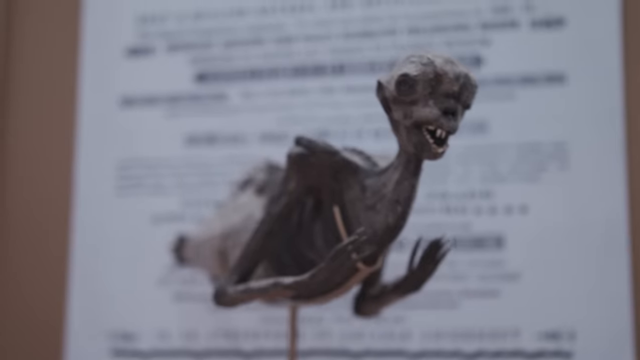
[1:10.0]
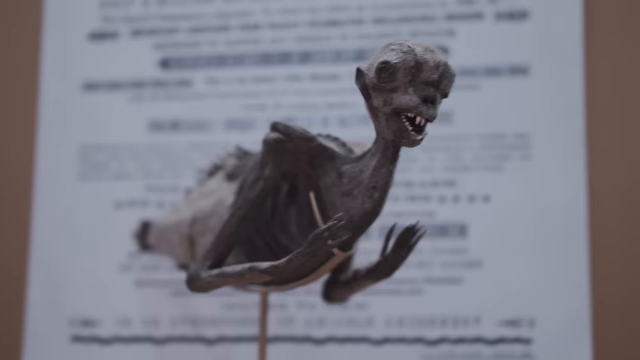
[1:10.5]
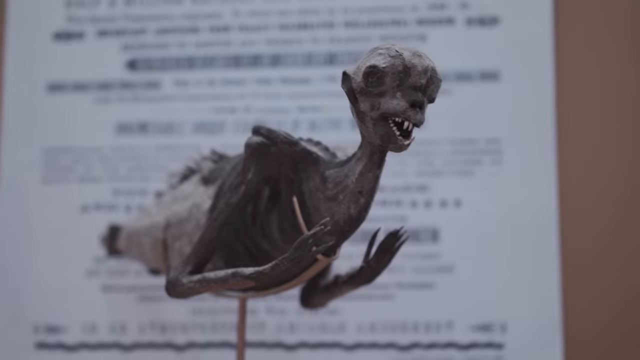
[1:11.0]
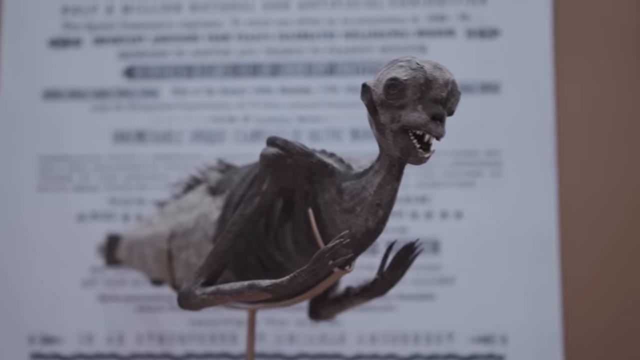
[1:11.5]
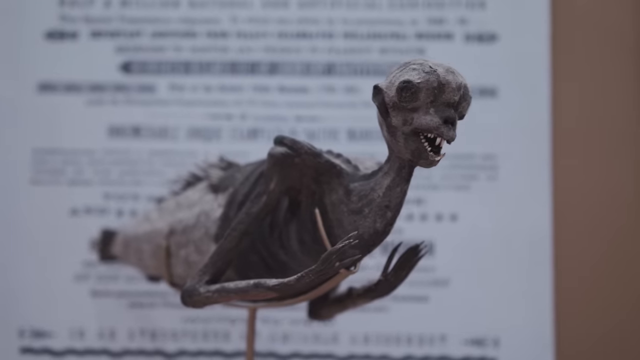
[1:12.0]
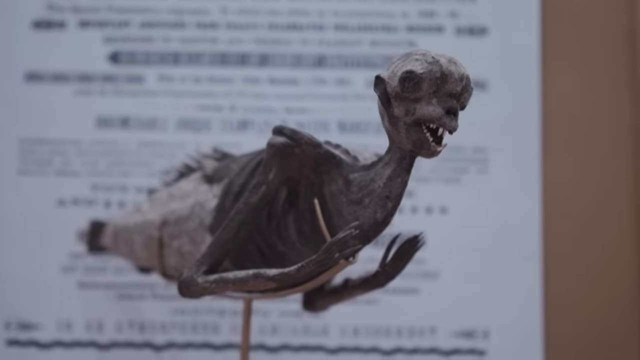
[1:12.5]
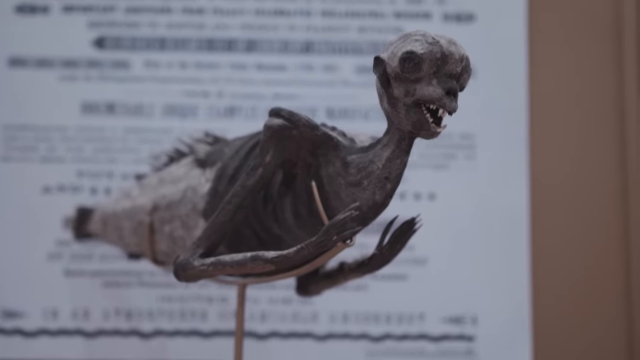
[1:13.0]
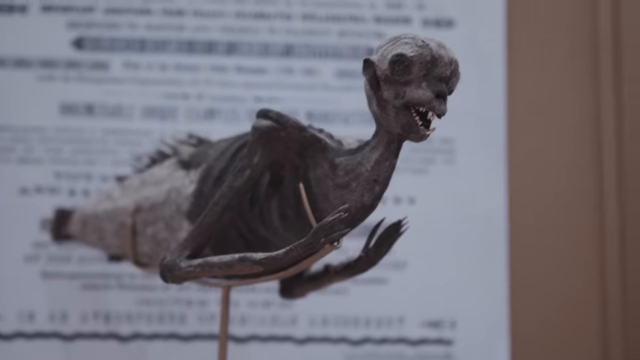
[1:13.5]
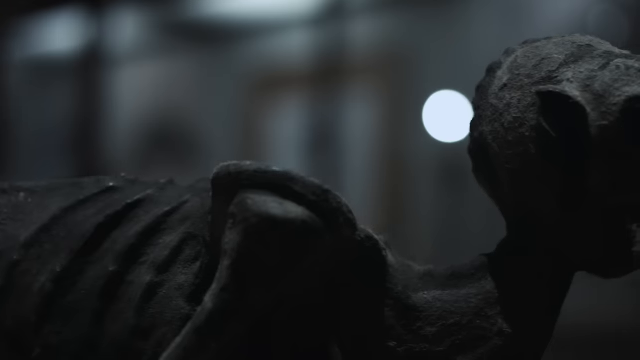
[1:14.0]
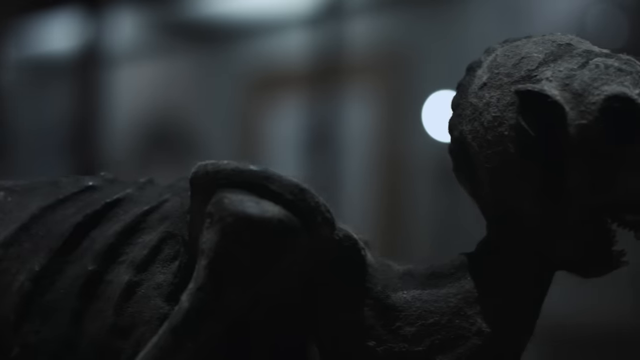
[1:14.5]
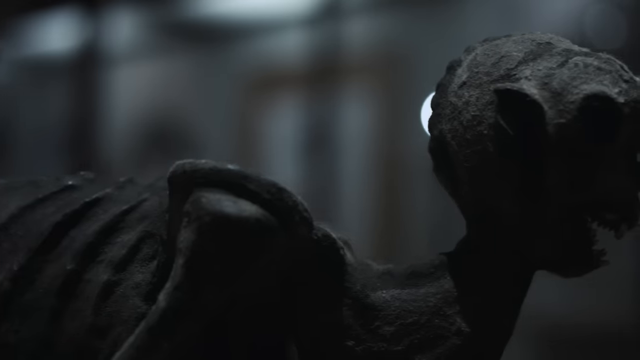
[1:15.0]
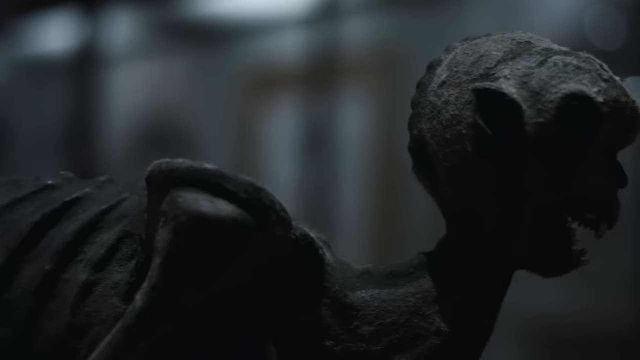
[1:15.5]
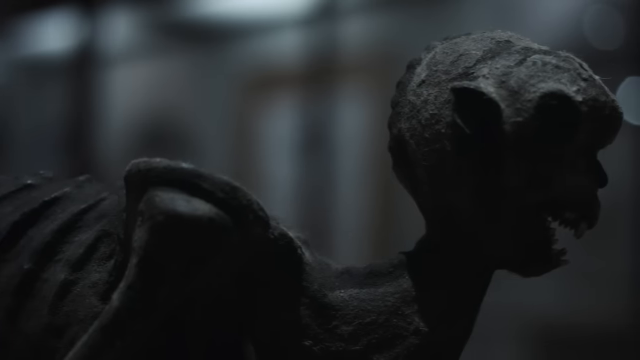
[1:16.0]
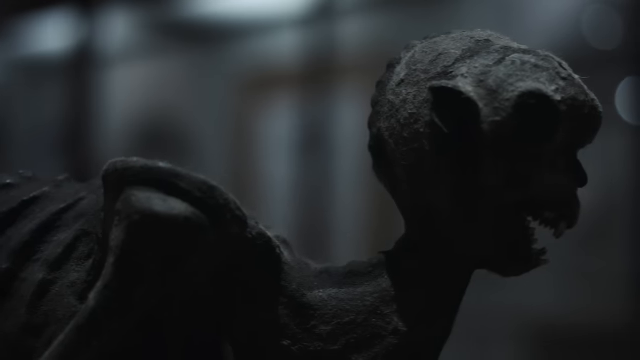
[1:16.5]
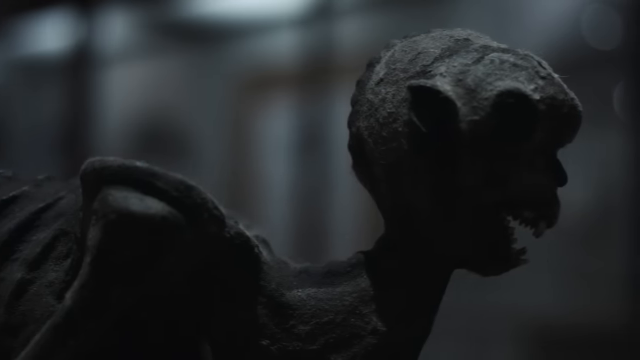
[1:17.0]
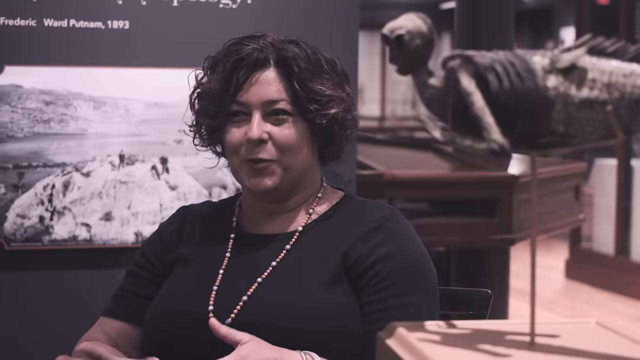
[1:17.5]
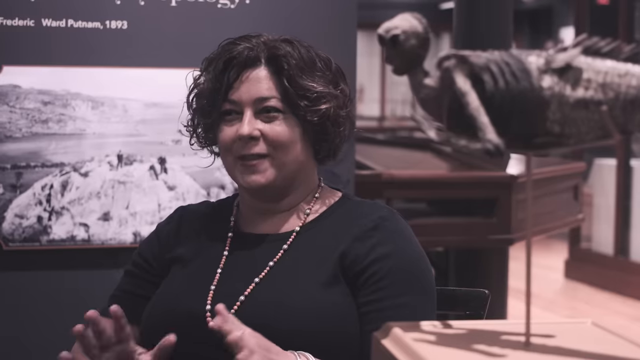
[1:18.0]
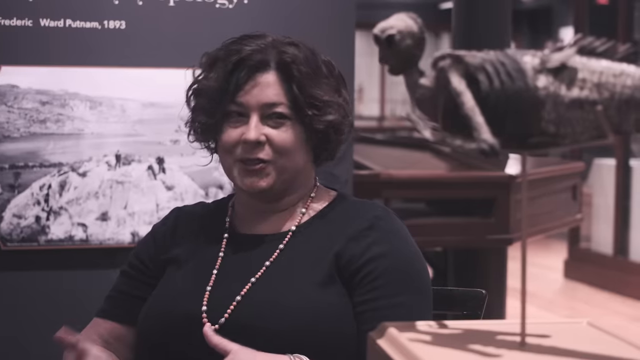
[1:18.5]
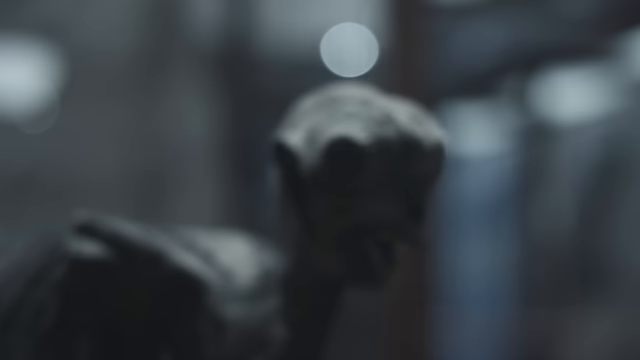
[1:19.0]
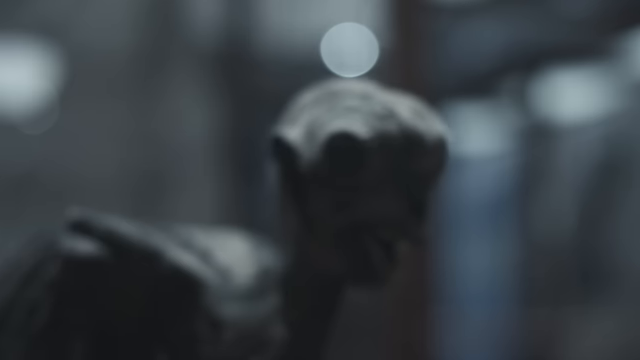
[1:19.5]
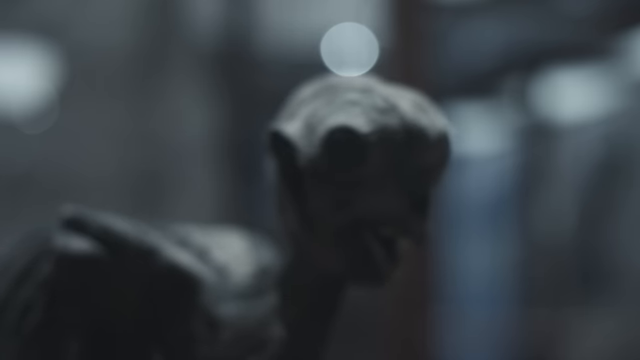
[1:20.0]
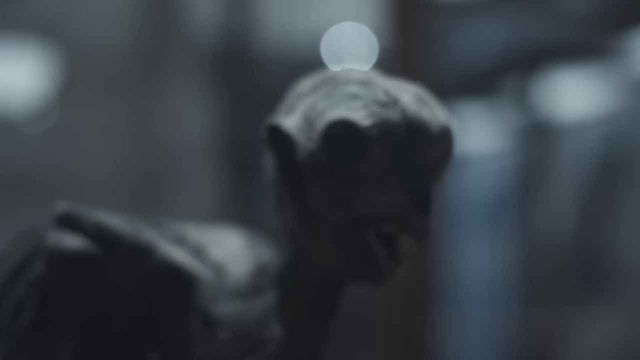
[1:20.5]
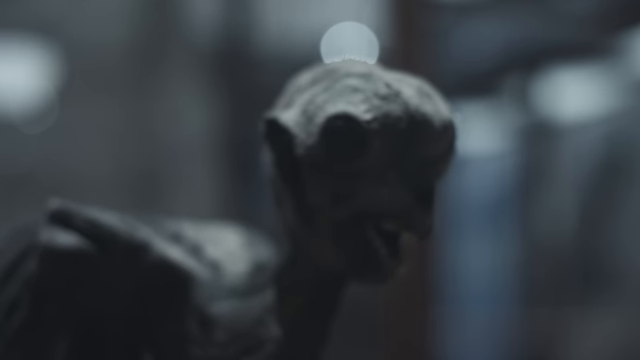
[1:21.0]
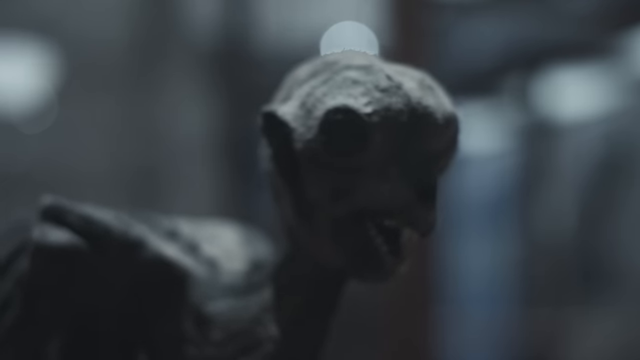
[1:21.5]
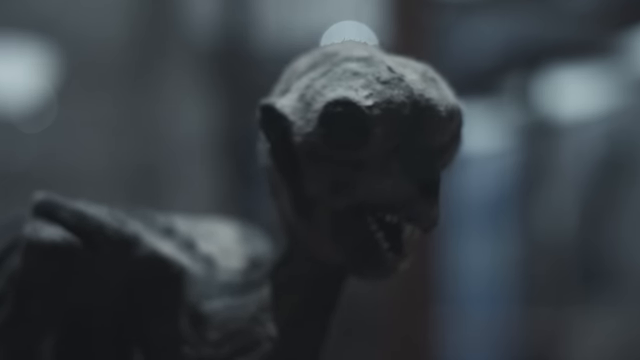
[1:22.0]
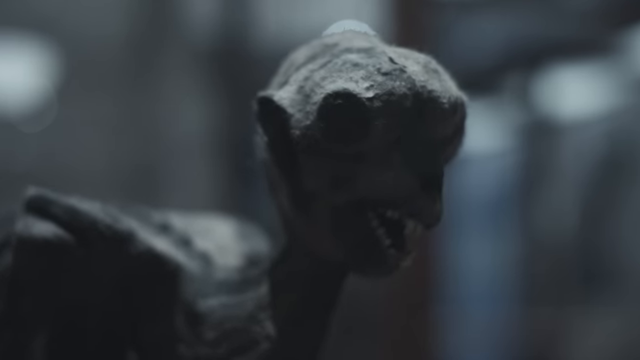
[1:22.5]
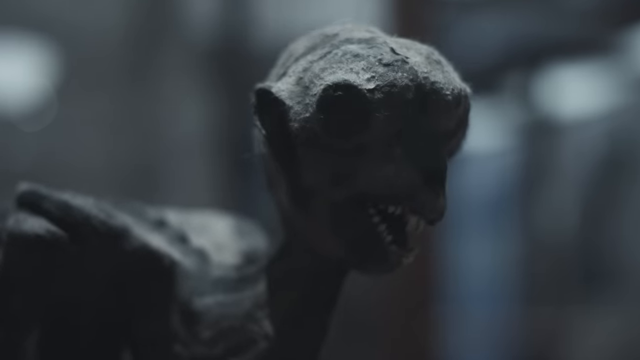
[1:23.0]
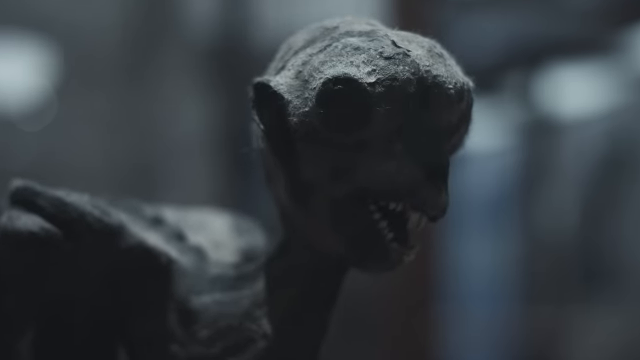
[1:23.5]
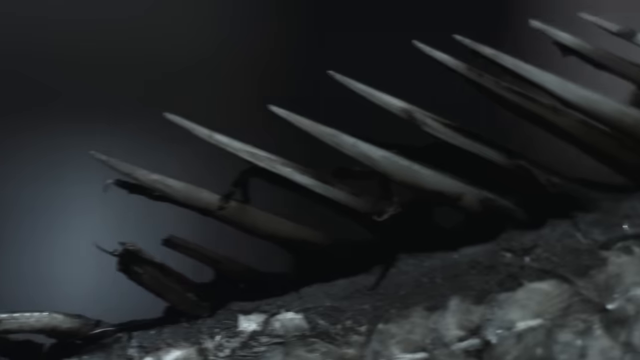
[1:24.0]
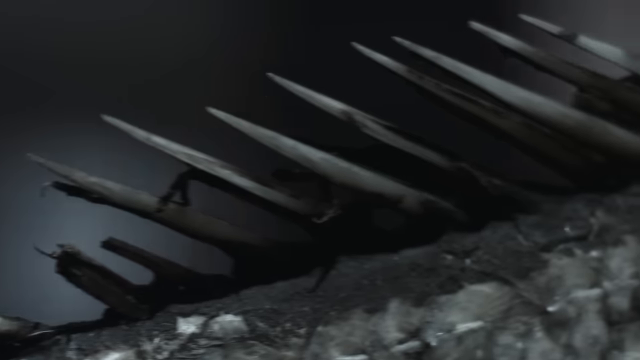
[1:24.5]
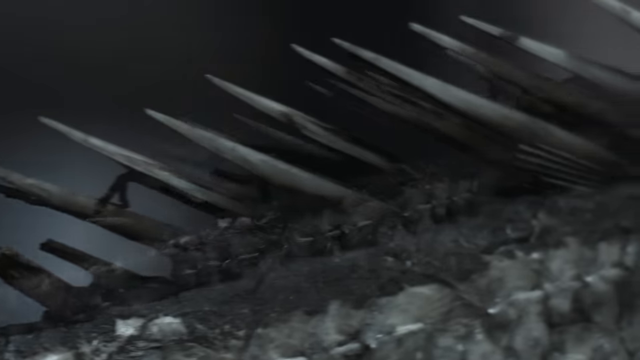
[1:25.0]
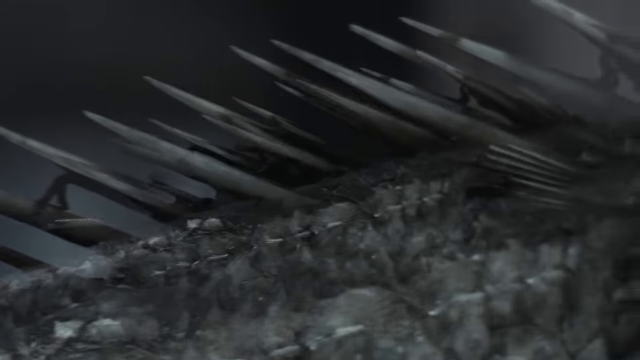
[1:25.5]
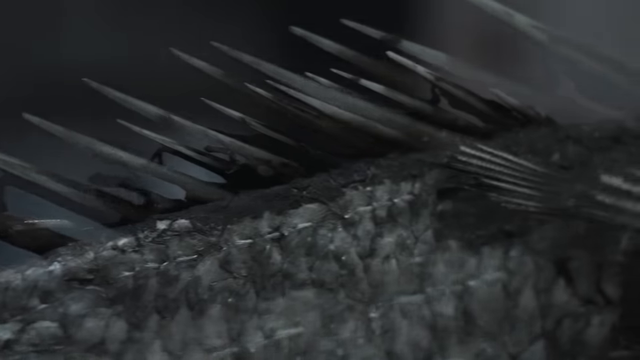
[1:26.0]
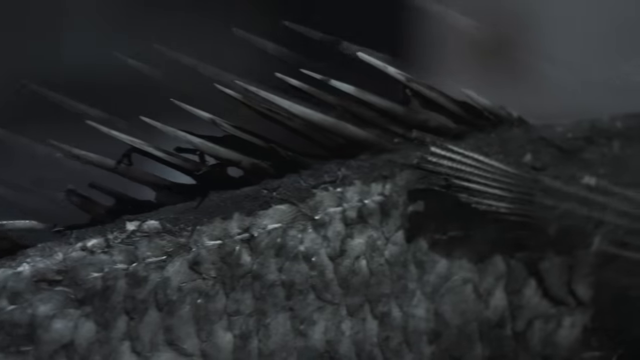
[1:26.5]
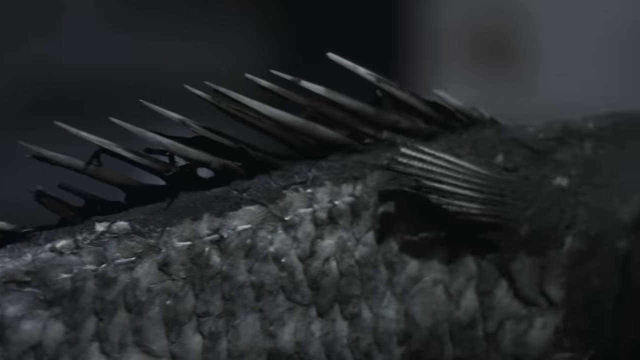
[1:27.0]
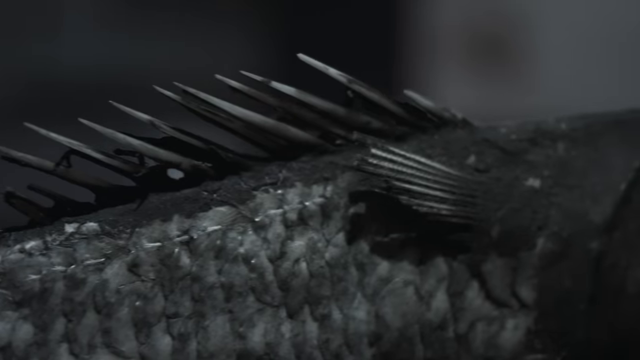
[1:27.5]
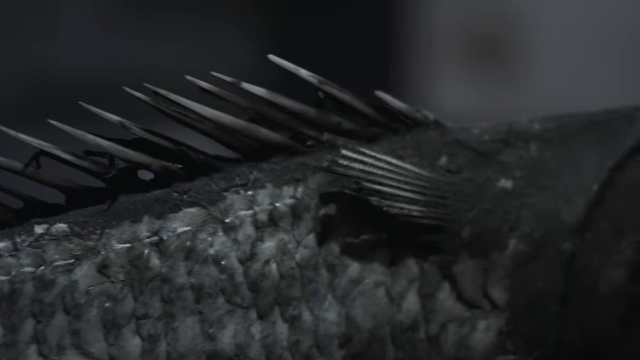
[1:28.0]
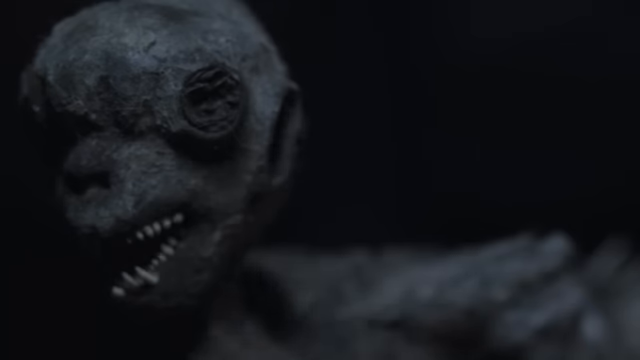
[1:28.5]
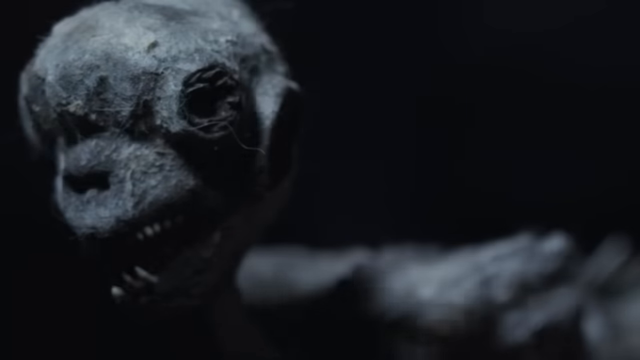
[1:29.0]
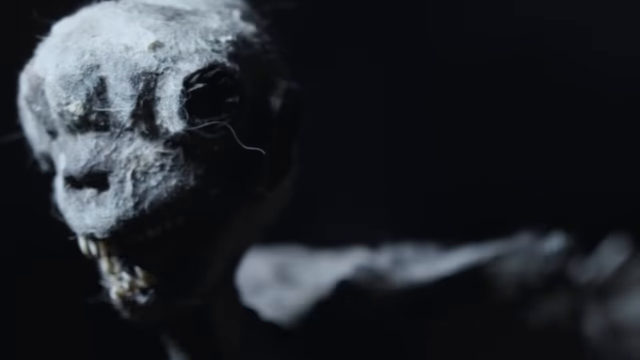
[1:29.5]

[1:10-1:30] The creature is shown with an odd-shaped head that somewhat resembles a little brown skunk-like animal, possibly deformed, and a half-fish body. The view then shows its fins, or spikes, running along the top middle of its back like on a fish.